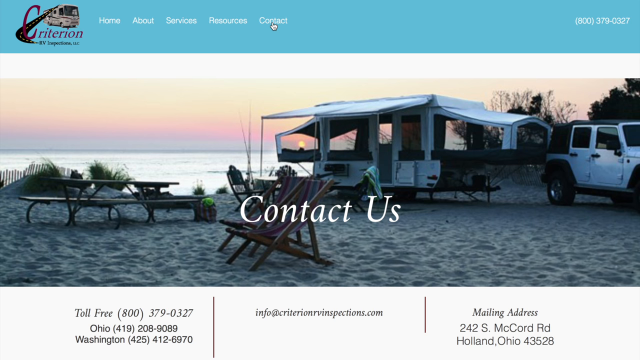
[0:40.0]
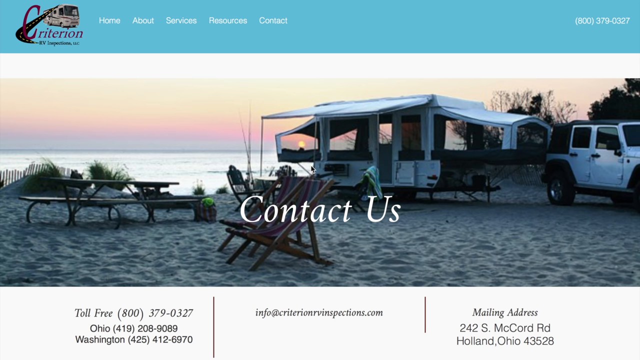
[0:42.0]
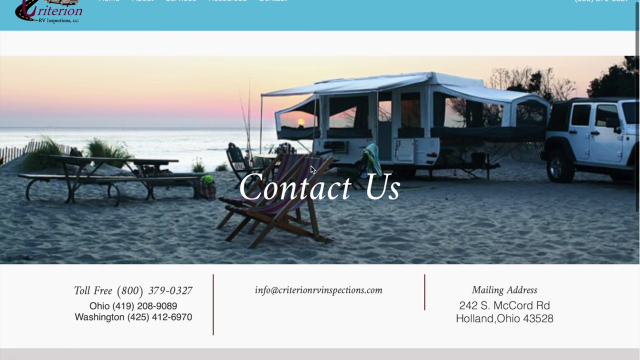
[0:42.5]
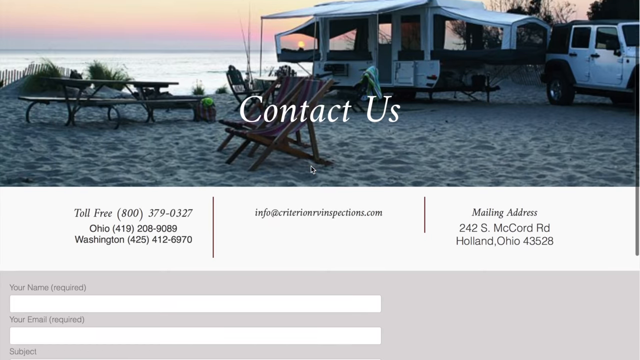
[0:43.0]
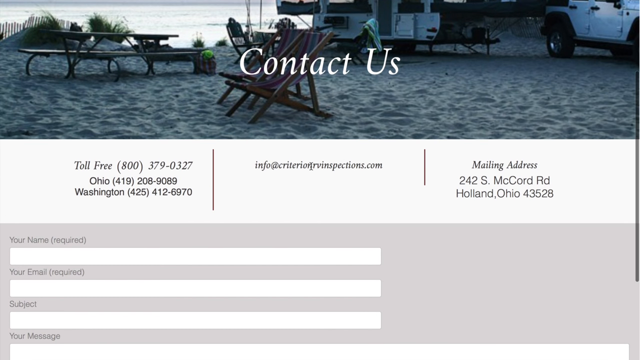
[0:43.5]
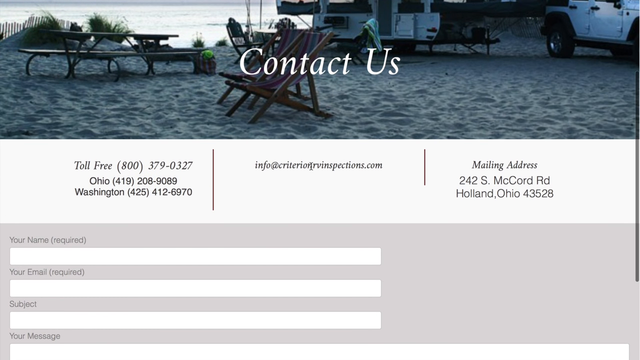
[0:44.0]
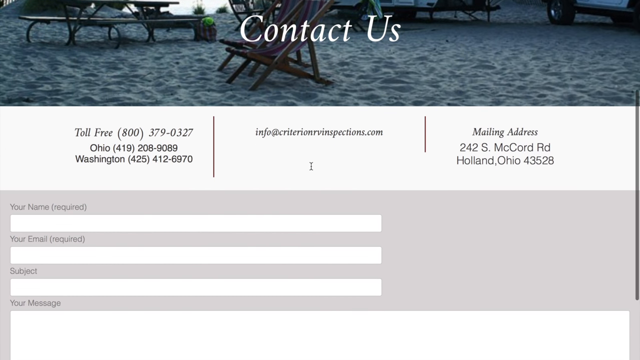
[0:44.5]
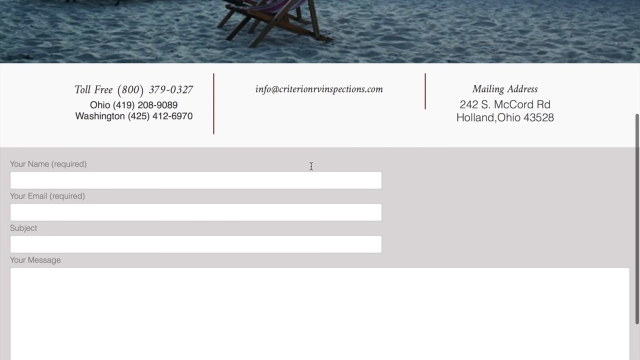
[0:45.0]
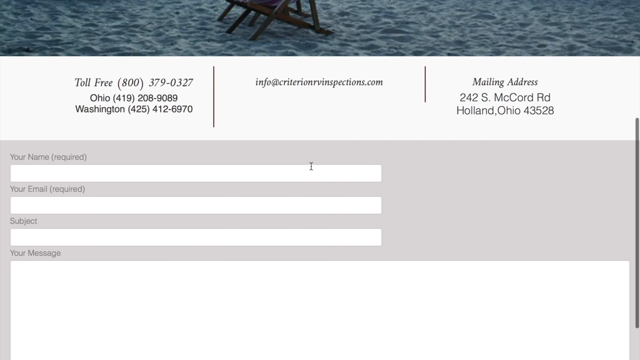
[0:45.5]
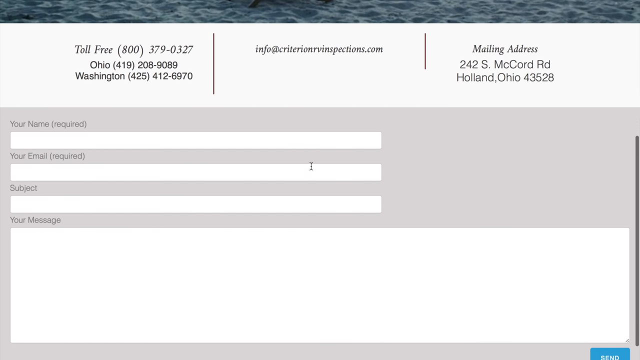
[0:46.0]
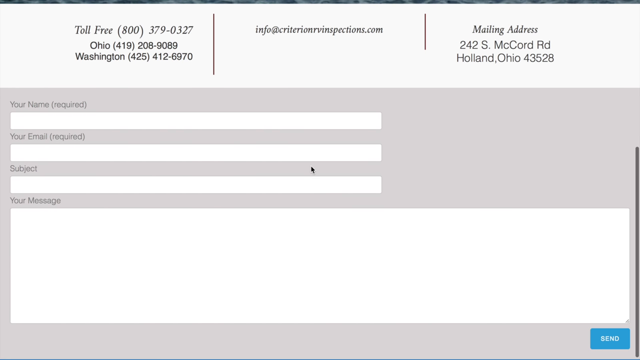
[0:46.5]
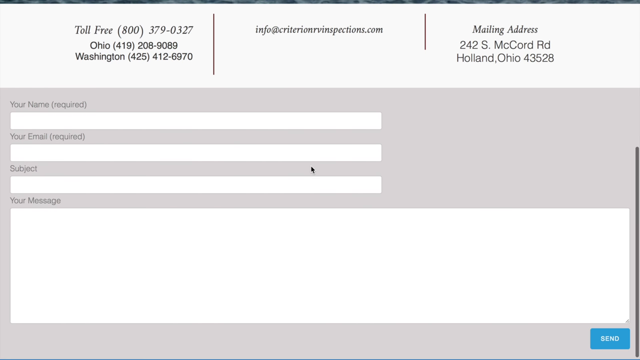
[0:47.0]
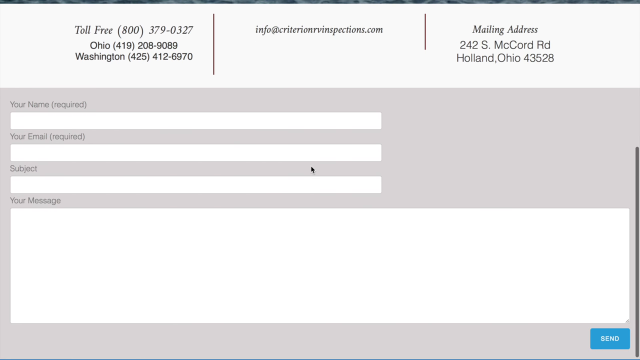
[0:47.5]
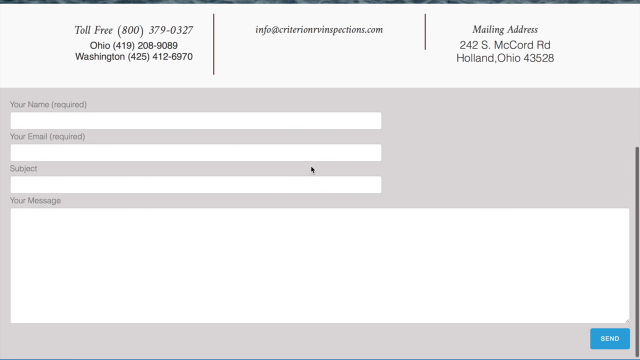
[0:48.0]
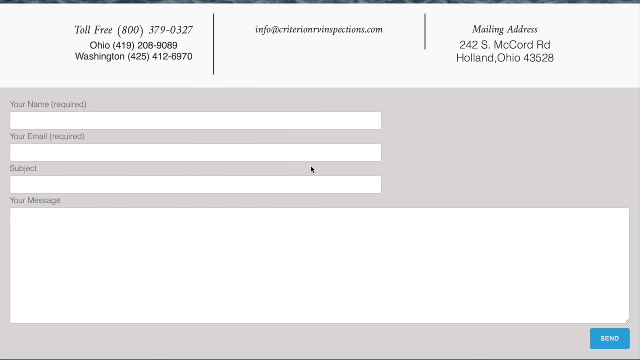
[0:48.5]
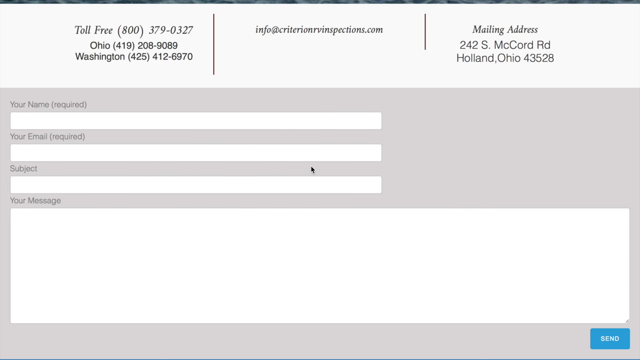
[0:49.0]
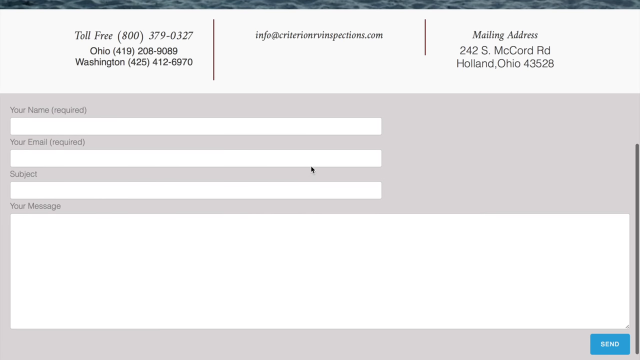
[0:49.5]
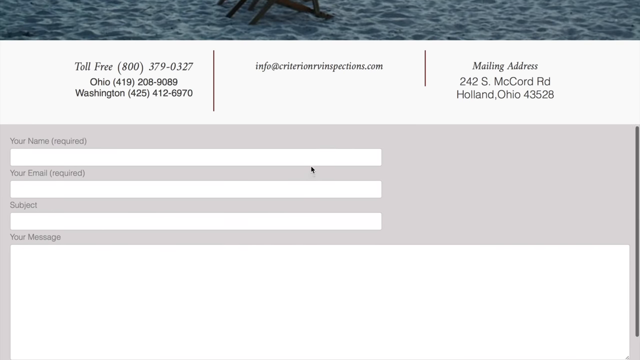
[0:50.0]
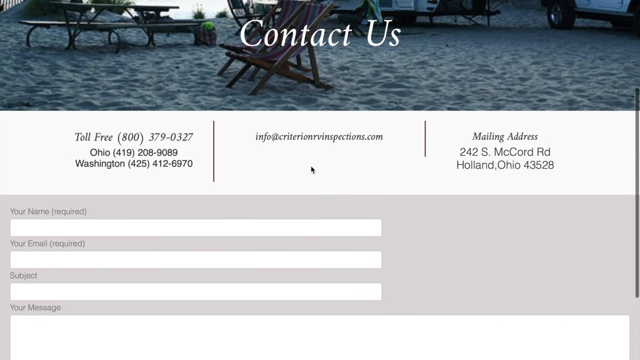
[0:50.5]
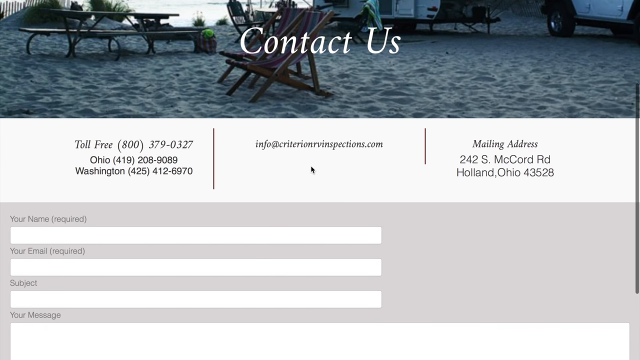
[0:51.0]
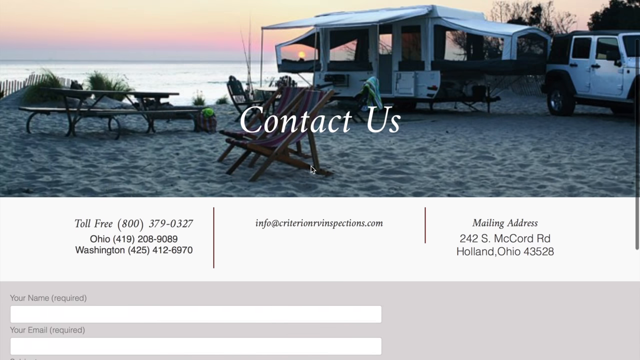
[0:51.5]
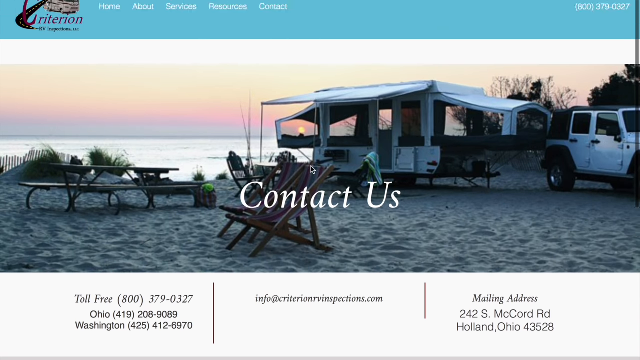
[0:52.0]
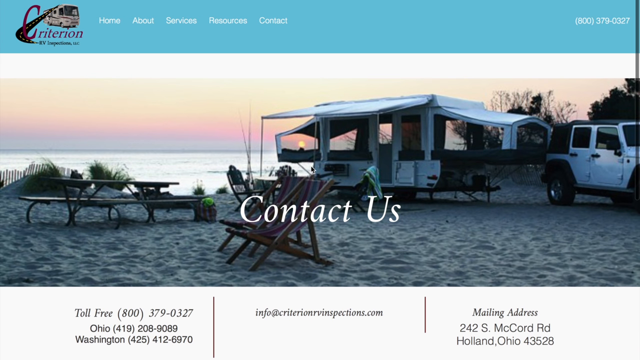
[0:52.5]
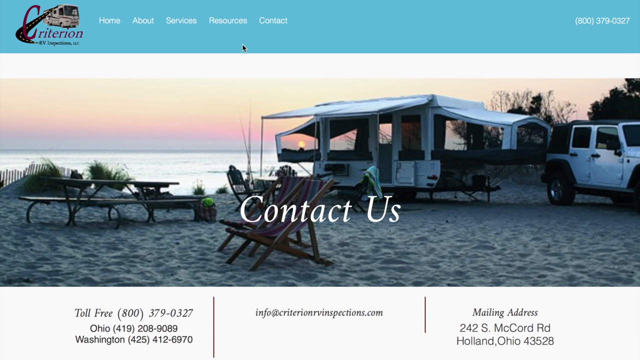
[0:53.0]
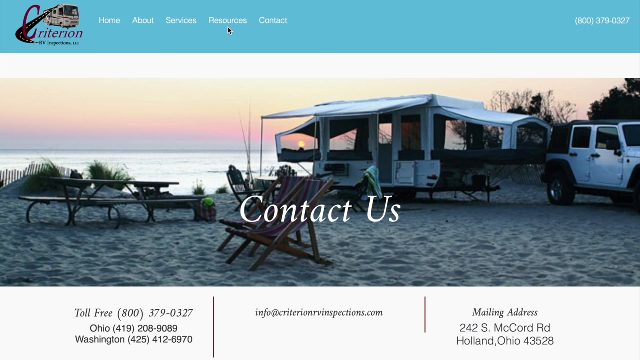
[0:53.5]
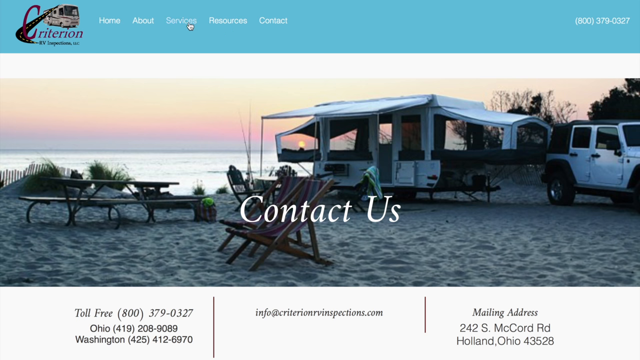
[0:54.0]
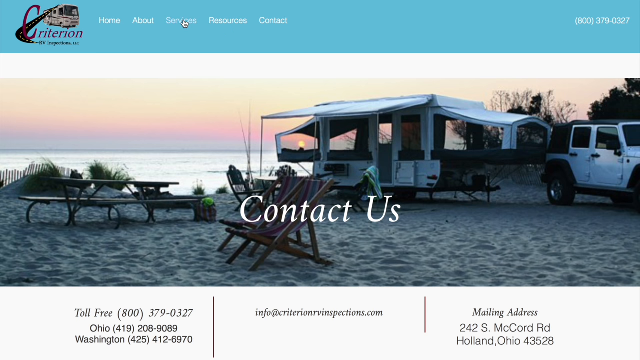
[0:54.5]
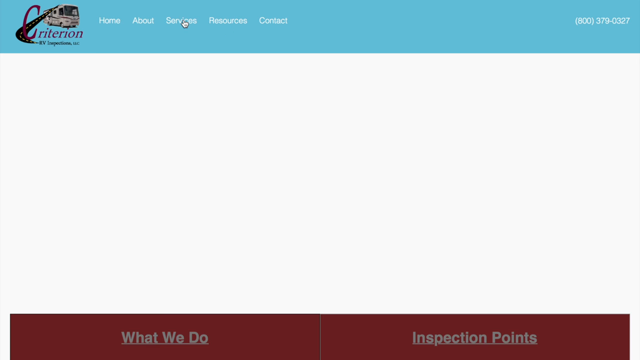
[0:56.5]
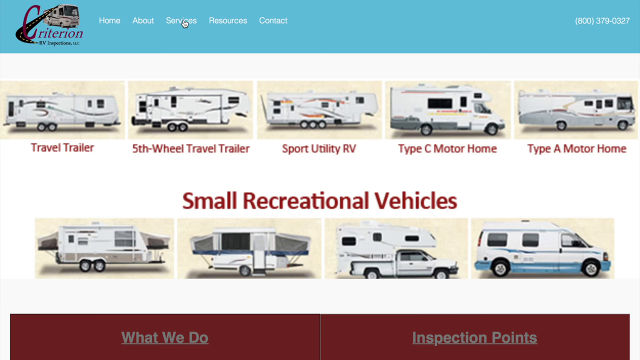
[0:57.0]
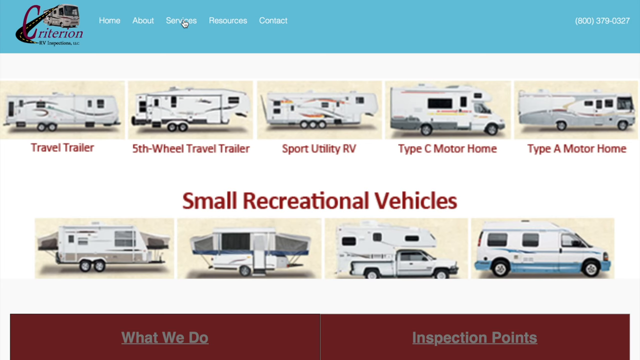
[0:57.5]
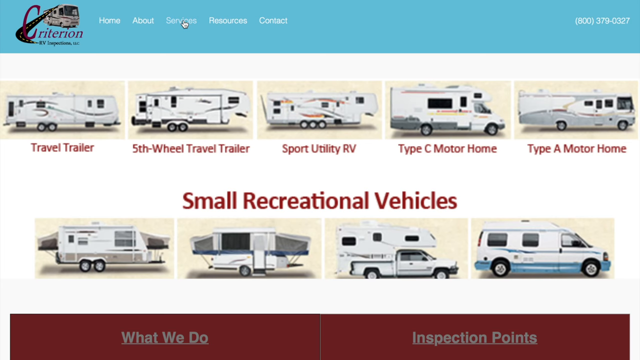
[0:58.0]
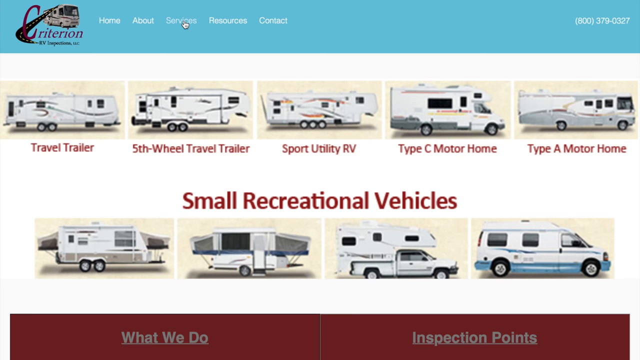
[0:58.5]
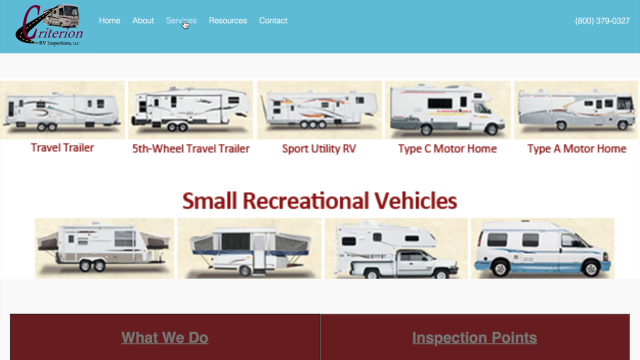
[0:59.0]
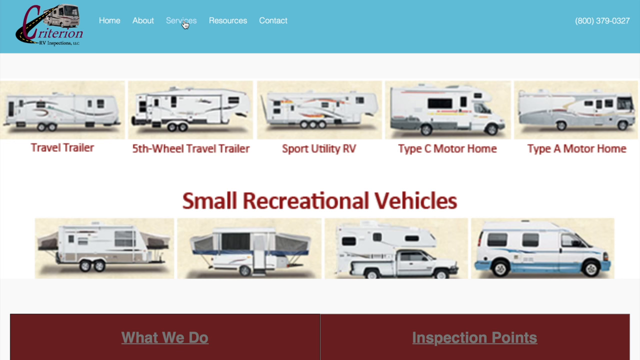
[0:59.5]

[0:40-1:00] The Contact Us page has three sections. At the top is a Contact Us banner with a picture of an RV on a beach setting, with benches and some chairs set up. The middle section shows, from left to right, phone numbers (a toll-free number, an Ohio number and a Washington number), an email address in the middle, and a mailing address on the right. At the bottom are fields for a name, an email, the subject of the email and a message. The Services navigation tab is then clicked, and the page transitions to the Services page.